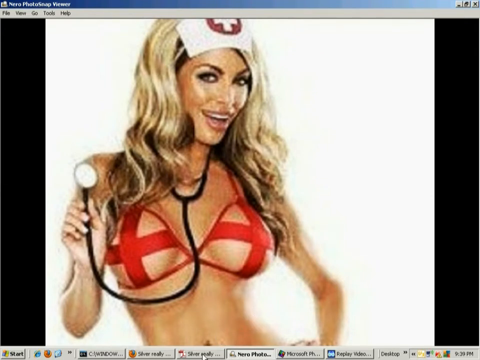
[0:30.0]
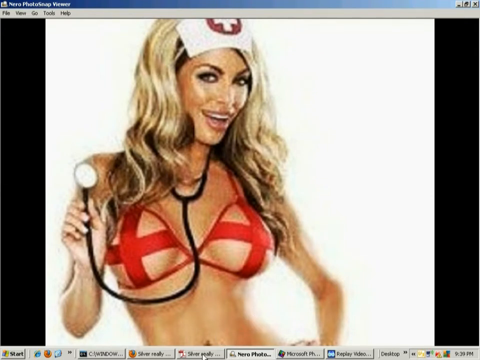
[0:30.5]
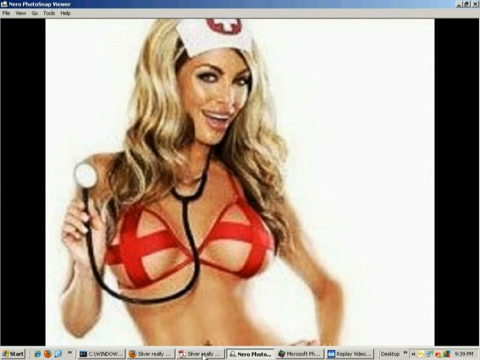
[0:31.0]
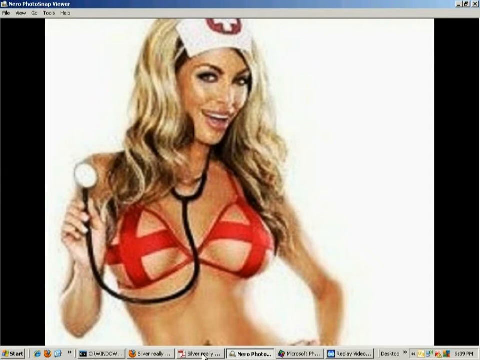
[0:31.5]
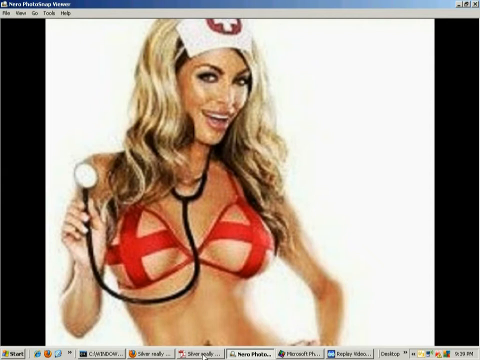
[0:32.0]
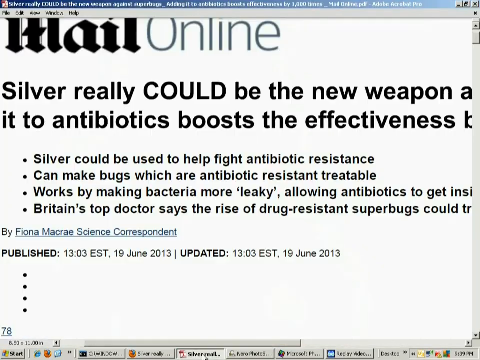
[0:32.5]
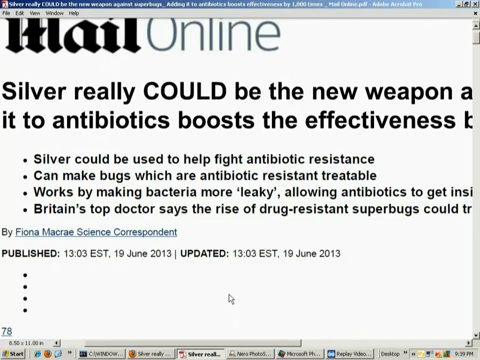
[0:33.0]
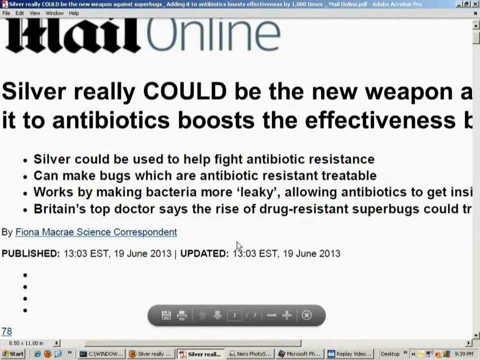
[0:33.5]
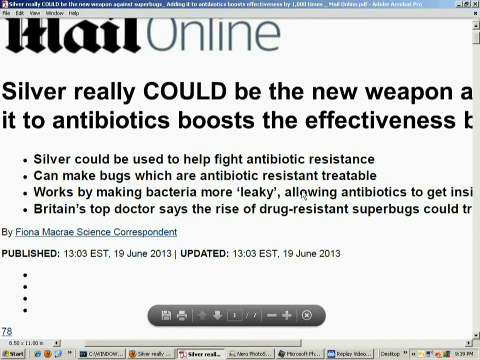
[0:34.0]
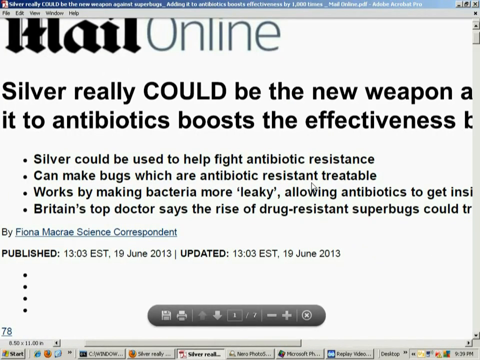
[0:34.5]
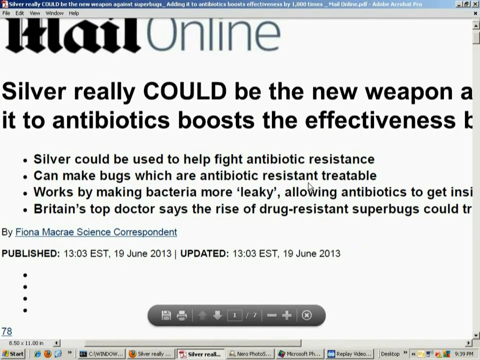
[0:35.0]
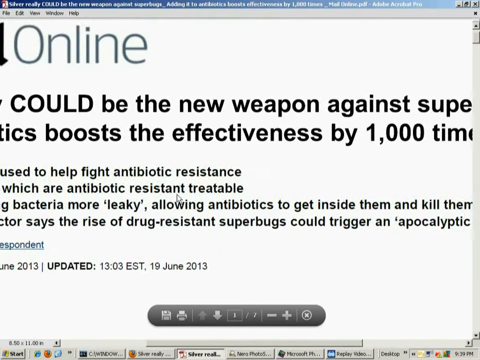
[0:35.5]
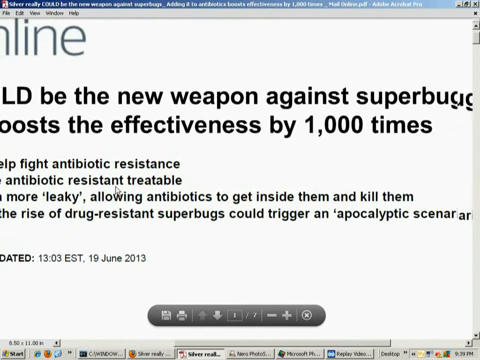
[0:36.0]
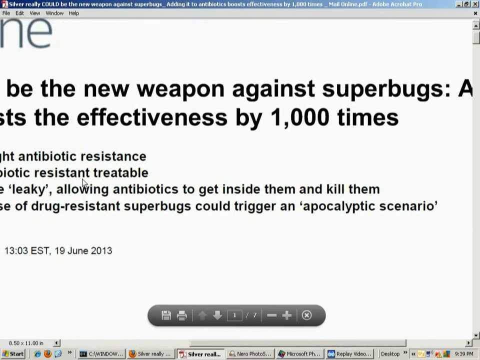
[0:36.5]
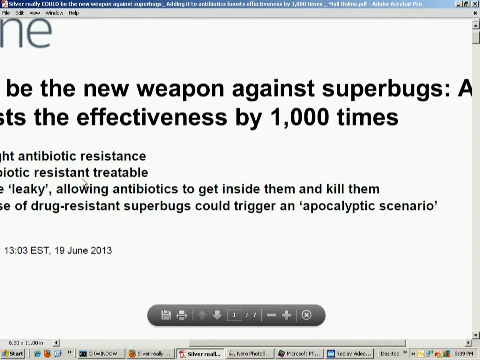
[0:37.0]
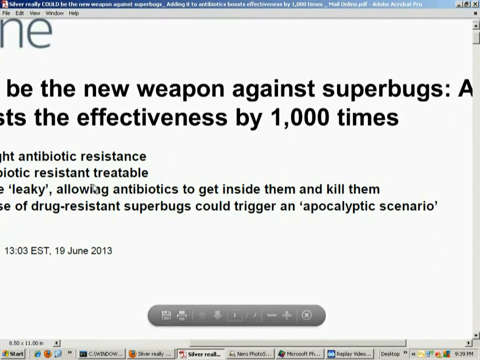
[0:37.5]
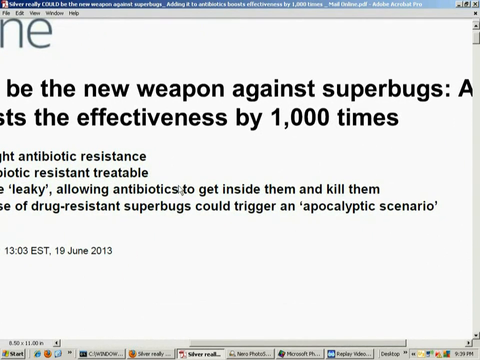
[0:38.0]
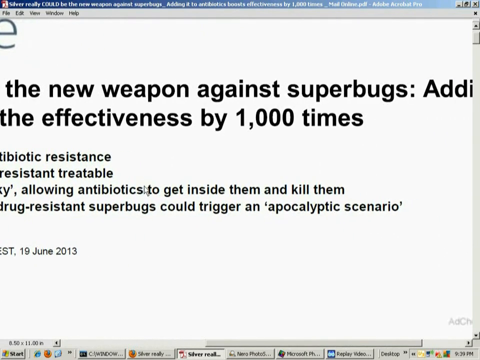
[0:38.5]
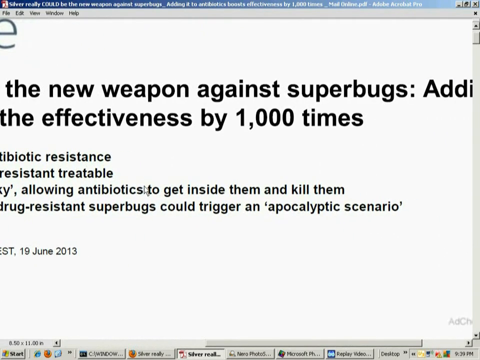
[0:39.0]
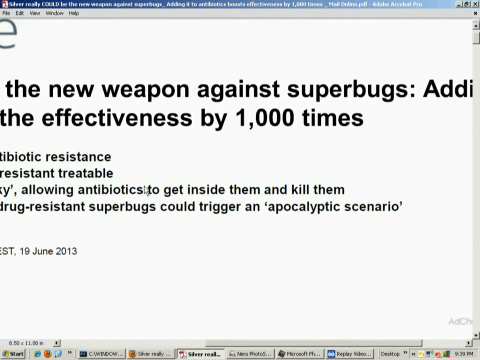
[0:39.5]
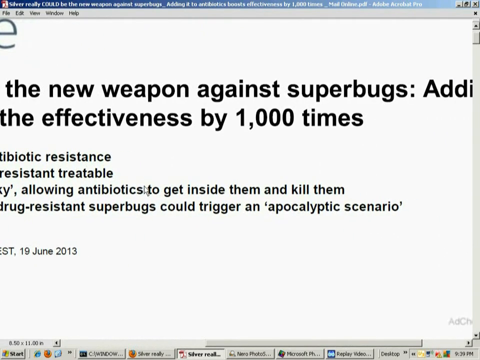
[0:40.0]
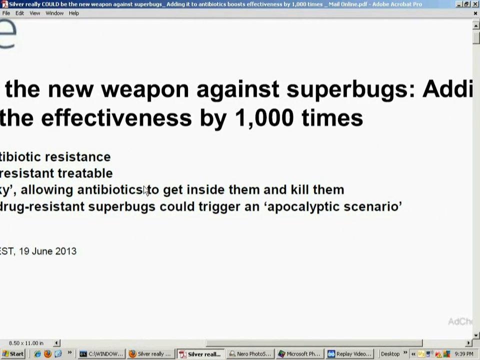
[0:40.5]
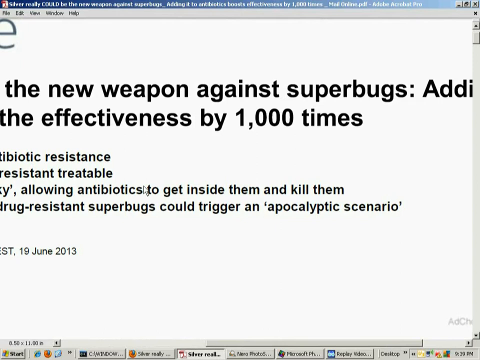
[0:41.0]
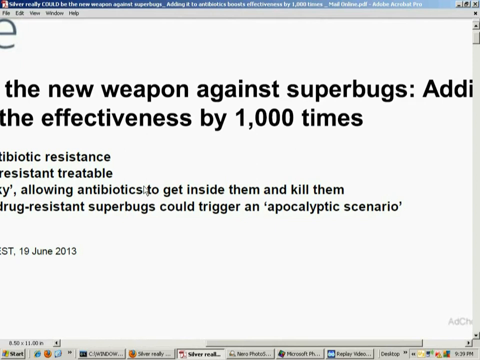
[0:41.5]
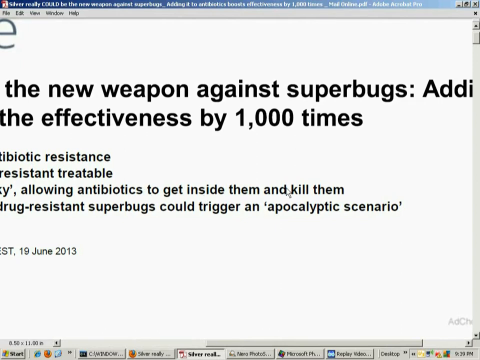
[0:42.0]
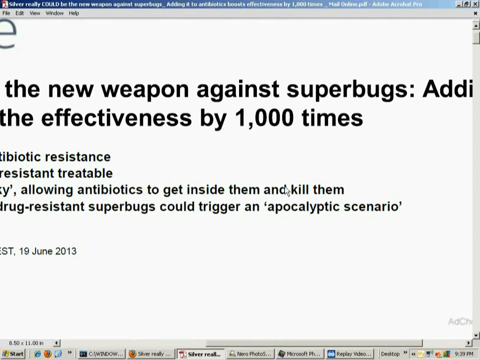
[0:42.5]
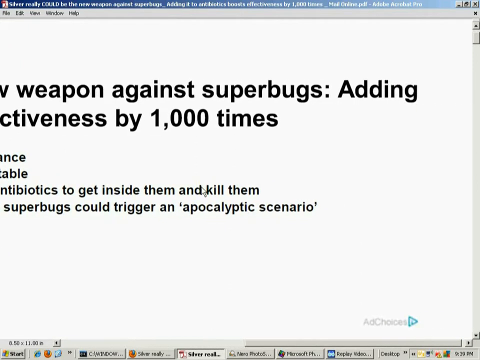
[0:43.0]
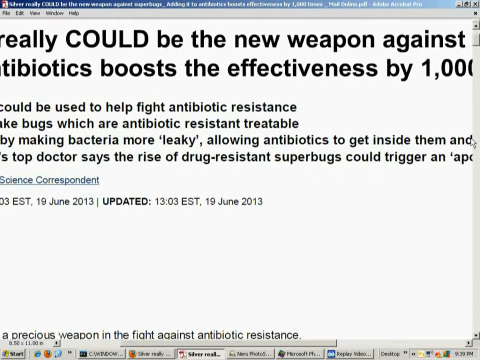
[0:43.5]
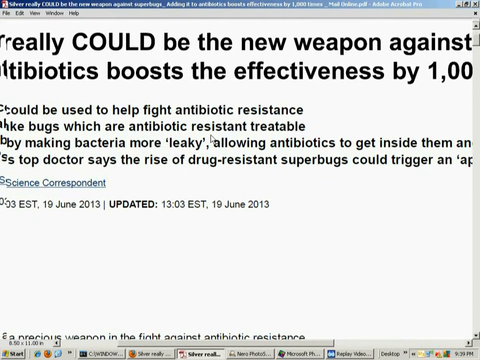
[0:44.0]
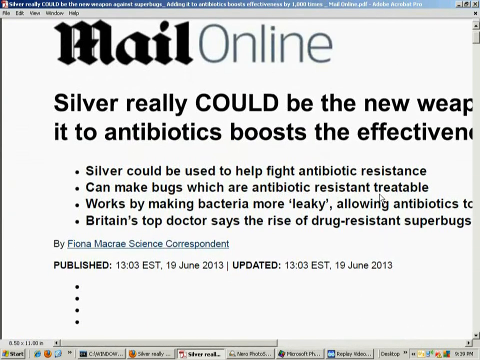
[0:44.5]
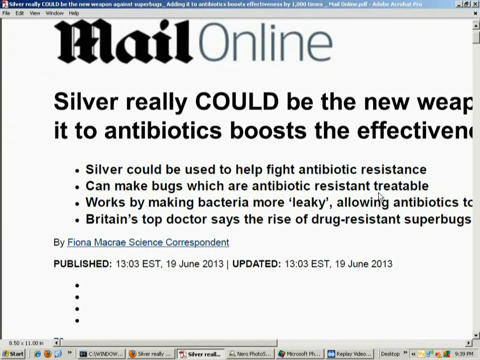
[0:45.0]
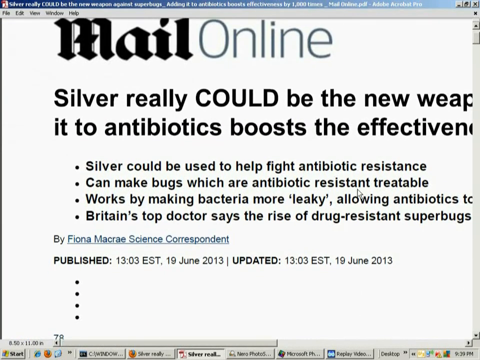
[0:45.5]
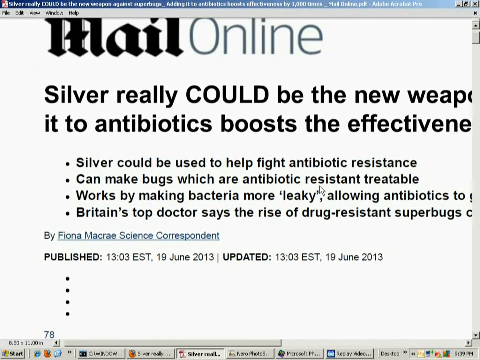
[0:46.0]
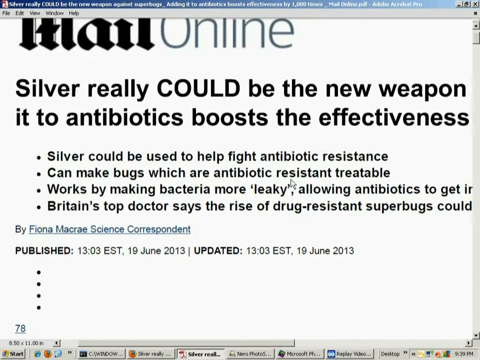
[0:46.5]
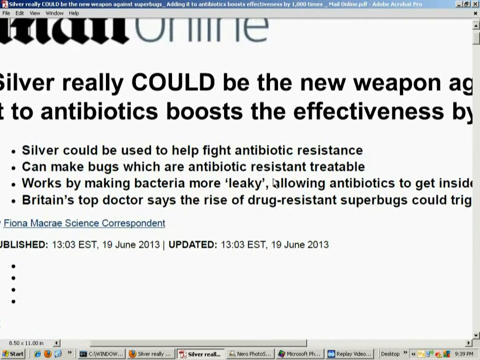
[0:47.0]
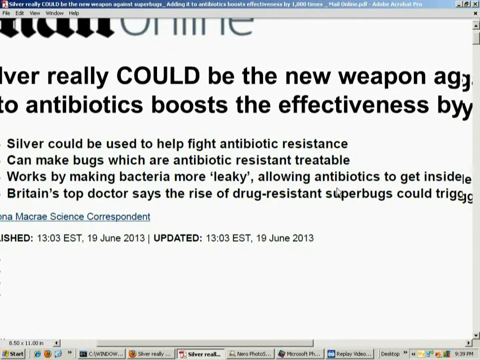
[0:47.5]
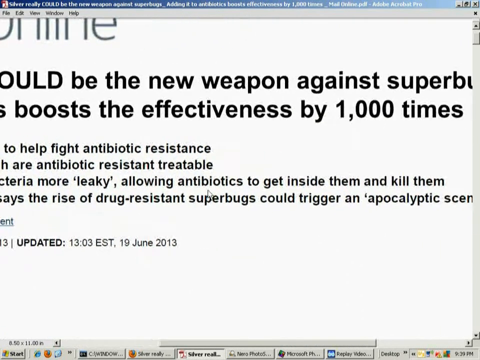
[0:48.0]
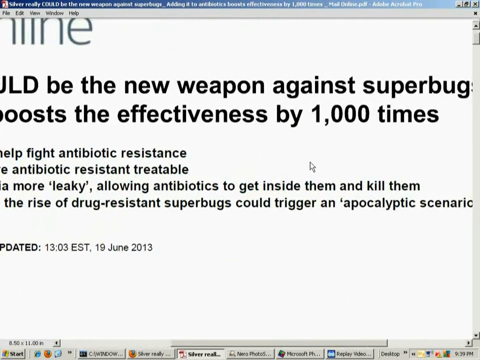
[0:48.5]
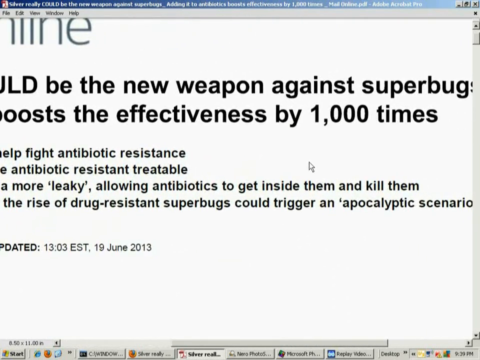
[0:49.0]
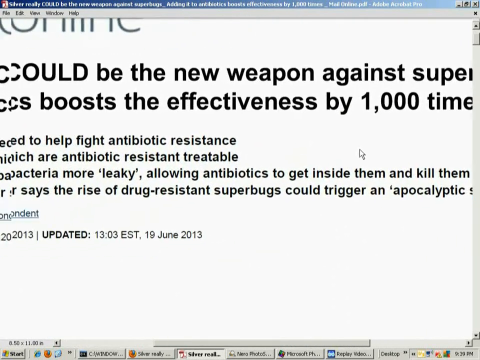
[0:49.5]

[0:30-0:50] The half-naked woman faces the viewer, smiling and standing in an attractive posture. The scene then changes to a screenshot of a Mail Online newspaper article. The heading reads "Silver really could be the new weapon", with the rest of the line cut off, and the next line reads "It's to antibiotics, boosts the effectiveness". Below, text reads "Silver could be used to help fight antibiotic resistance", "can make bugs which are antibiotic resistant treatable" and "Works by making bacteria more leaky, allowing antibiotics to get inside". Further text reads "Britain's top doctor says, the rise of drug-resistant superbugs could". The article was published on 19 June 2018. The side of the page that was hidden then comes into view, showing more information, and the article is by Fiona Macrae, a science correspondent.